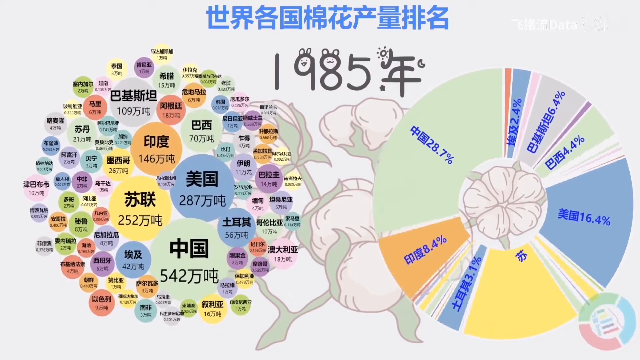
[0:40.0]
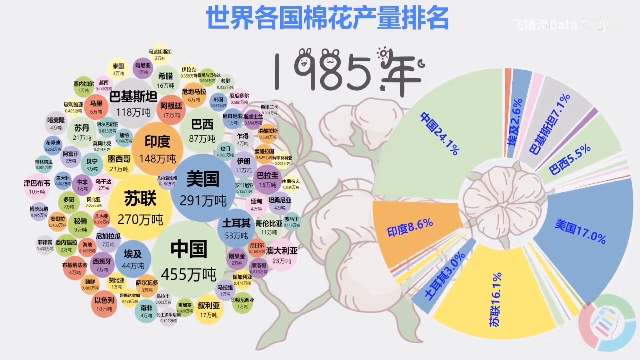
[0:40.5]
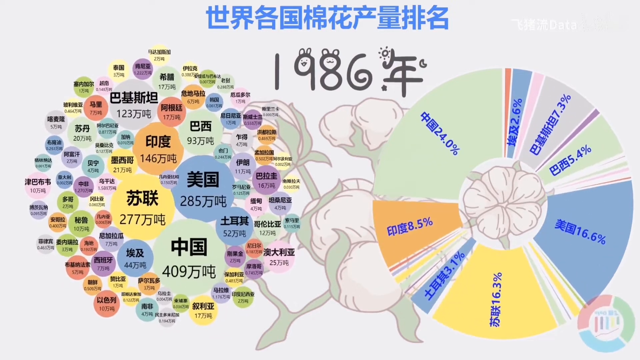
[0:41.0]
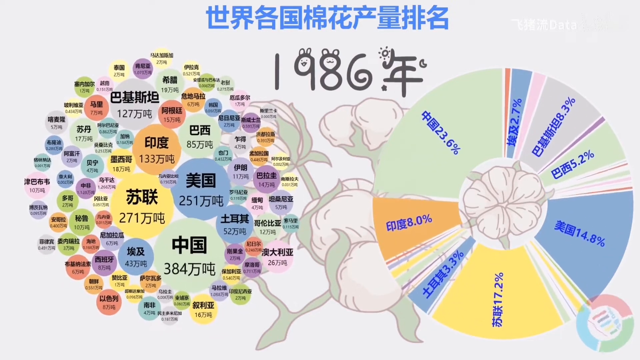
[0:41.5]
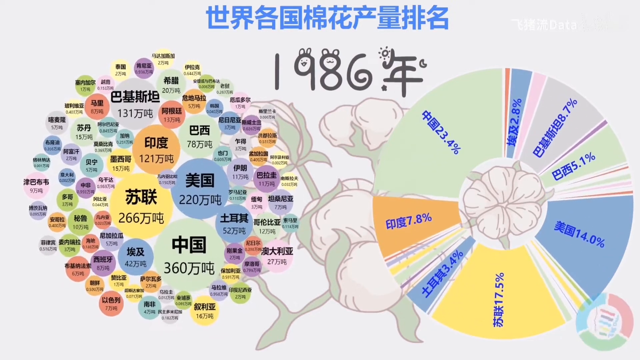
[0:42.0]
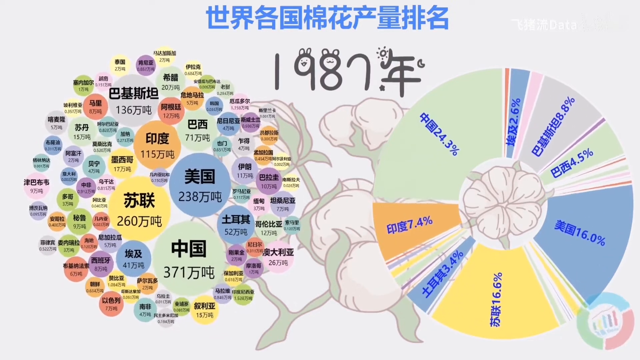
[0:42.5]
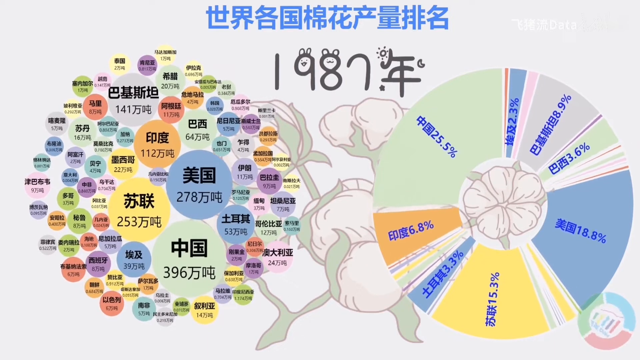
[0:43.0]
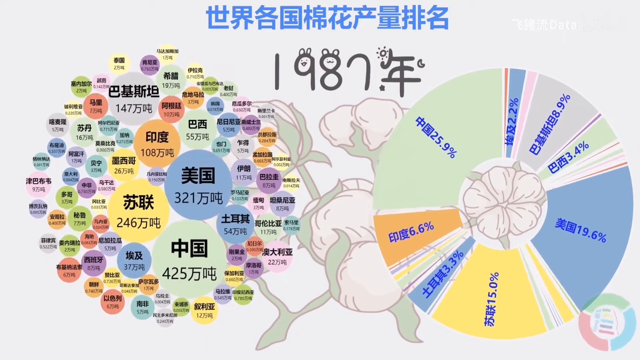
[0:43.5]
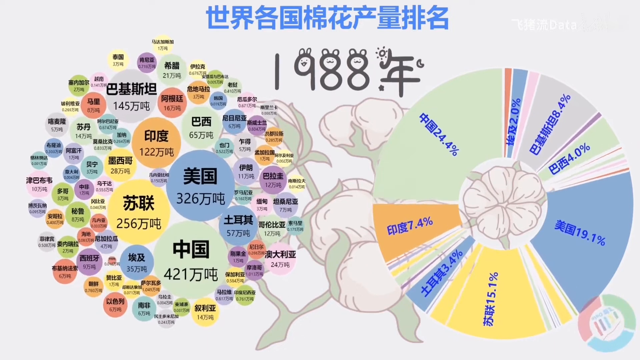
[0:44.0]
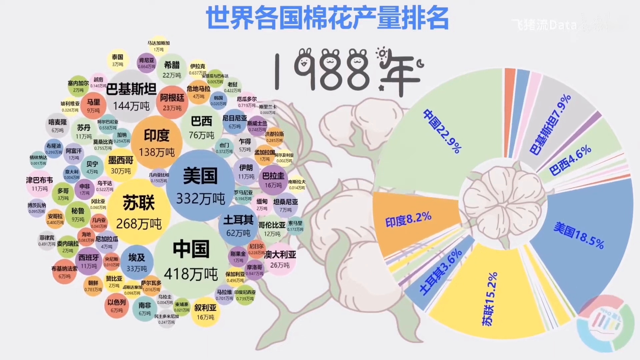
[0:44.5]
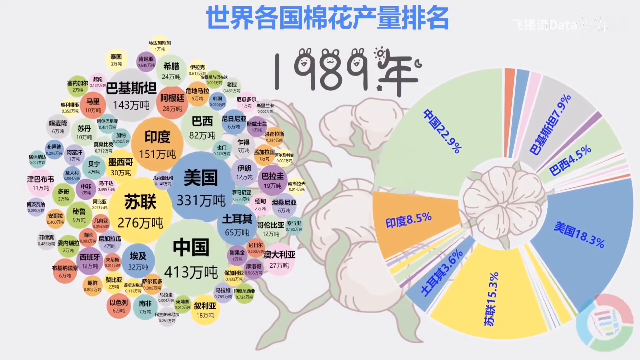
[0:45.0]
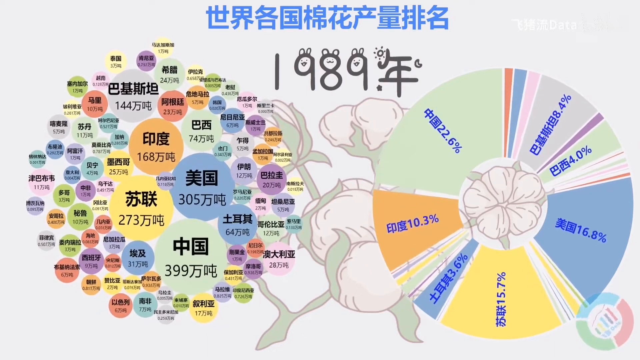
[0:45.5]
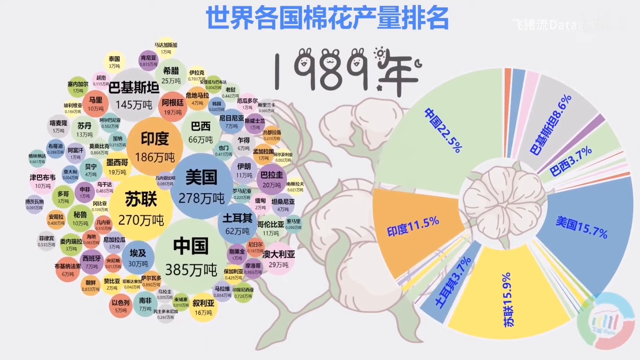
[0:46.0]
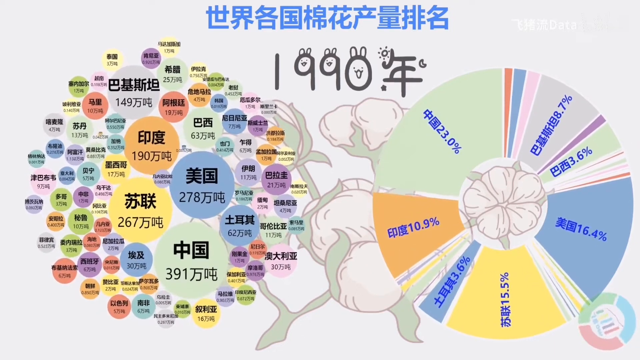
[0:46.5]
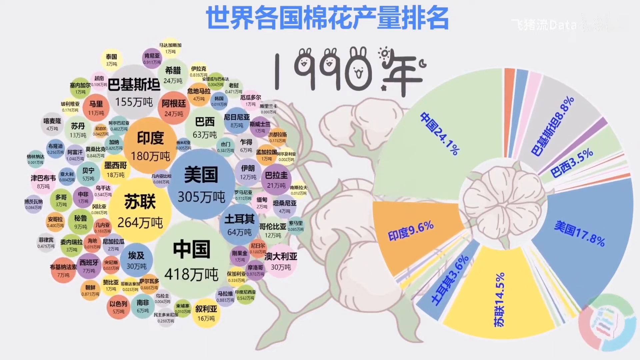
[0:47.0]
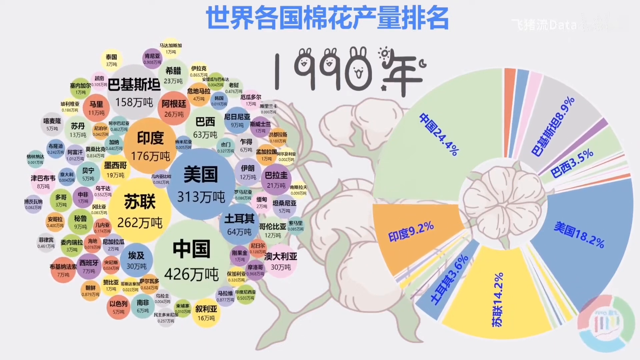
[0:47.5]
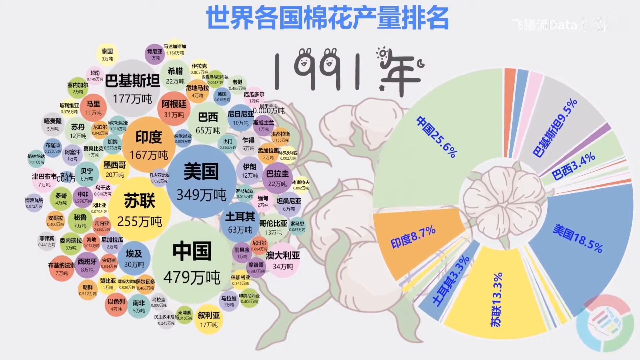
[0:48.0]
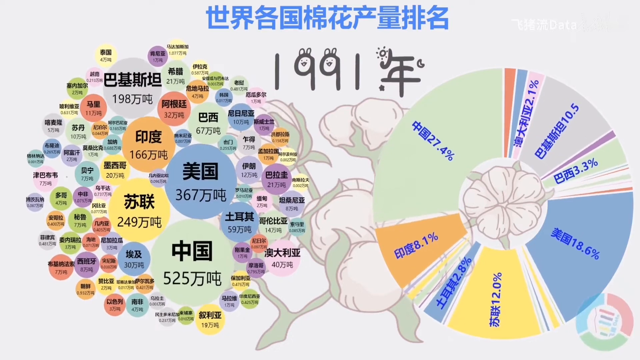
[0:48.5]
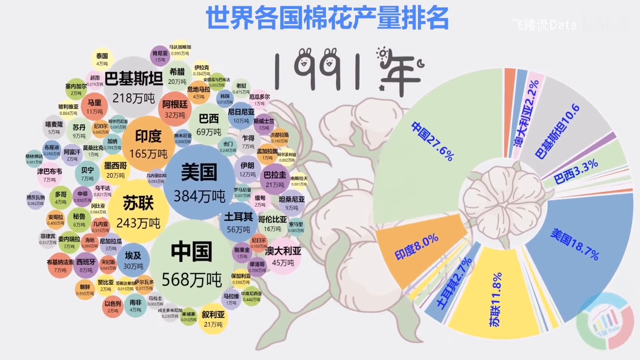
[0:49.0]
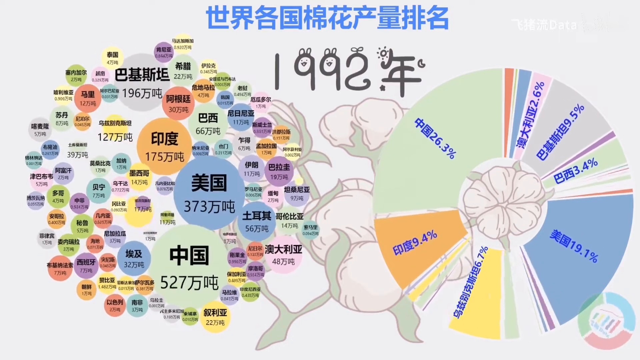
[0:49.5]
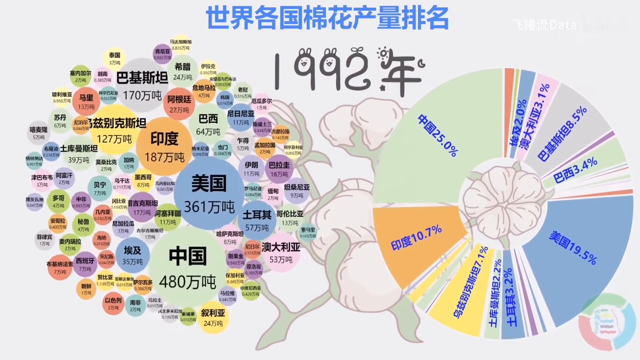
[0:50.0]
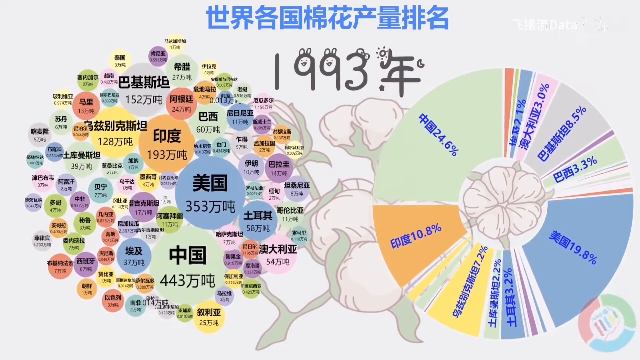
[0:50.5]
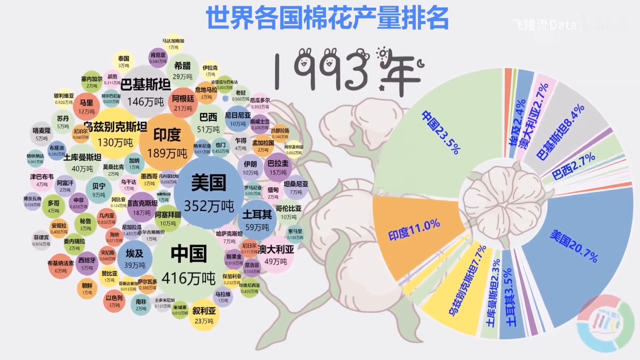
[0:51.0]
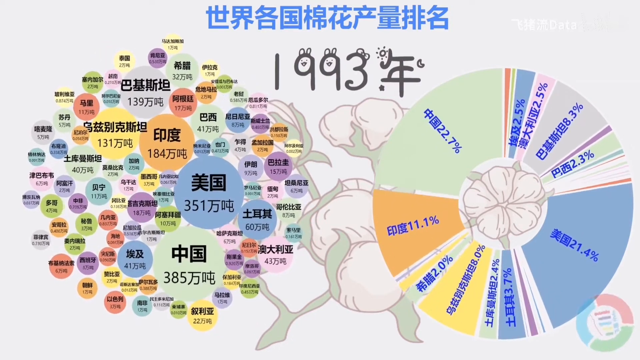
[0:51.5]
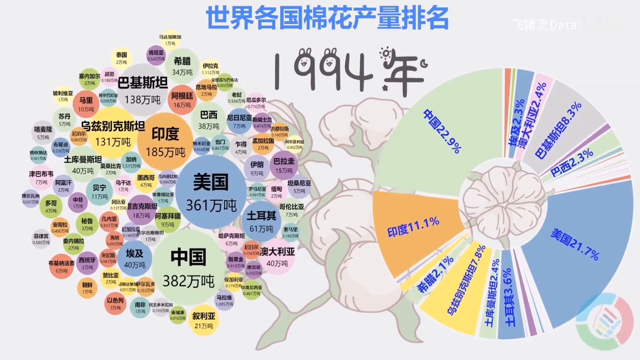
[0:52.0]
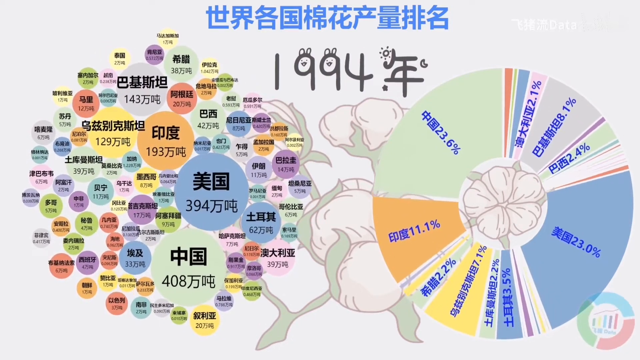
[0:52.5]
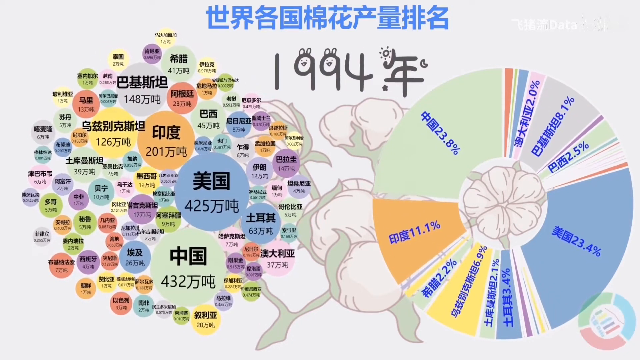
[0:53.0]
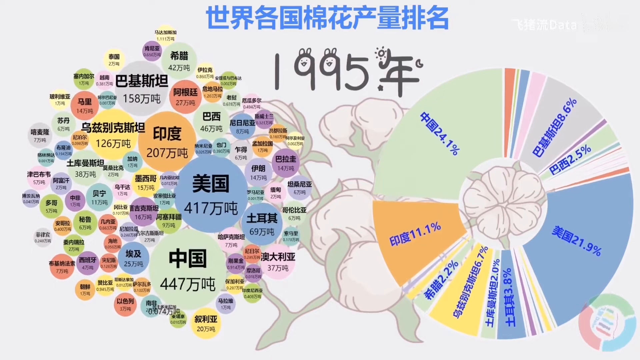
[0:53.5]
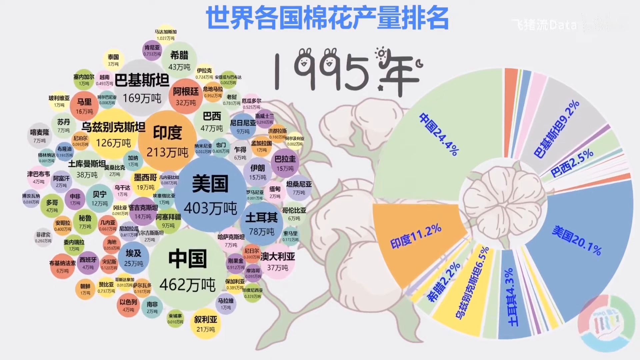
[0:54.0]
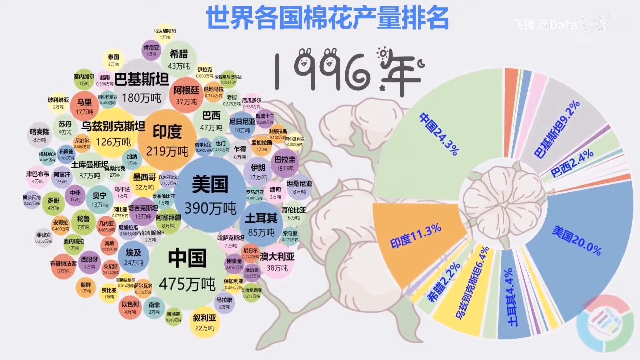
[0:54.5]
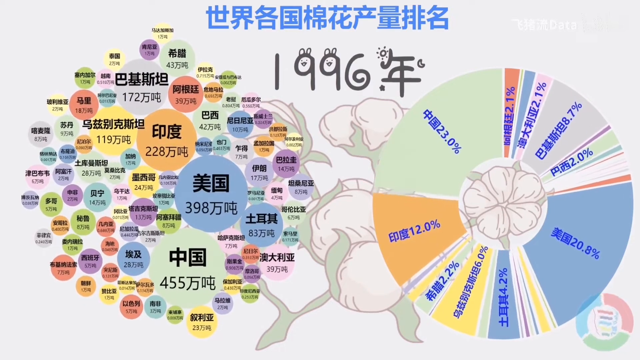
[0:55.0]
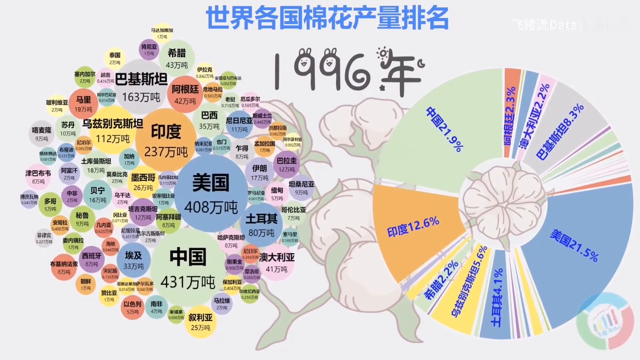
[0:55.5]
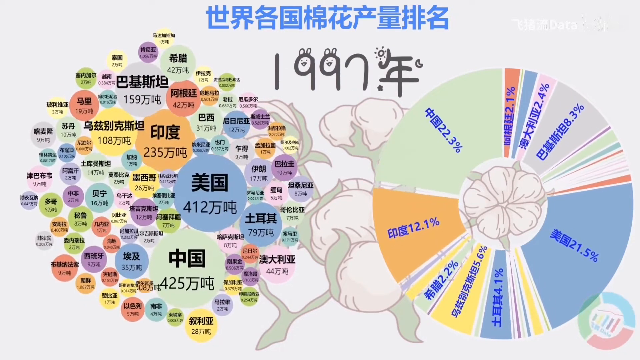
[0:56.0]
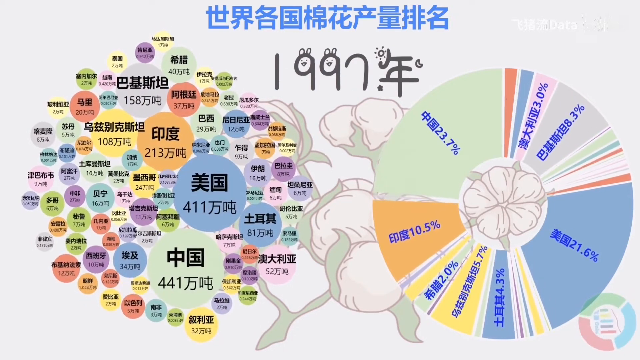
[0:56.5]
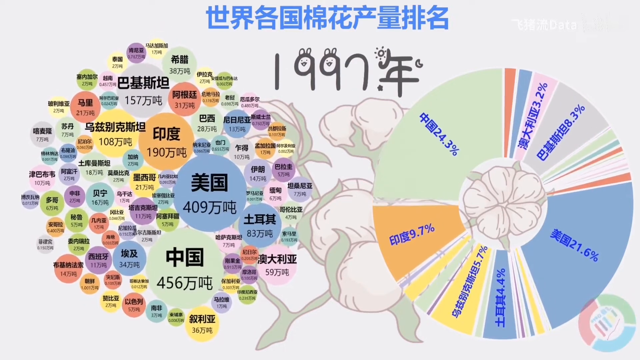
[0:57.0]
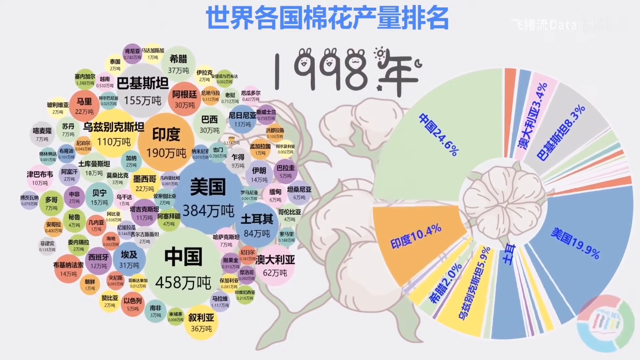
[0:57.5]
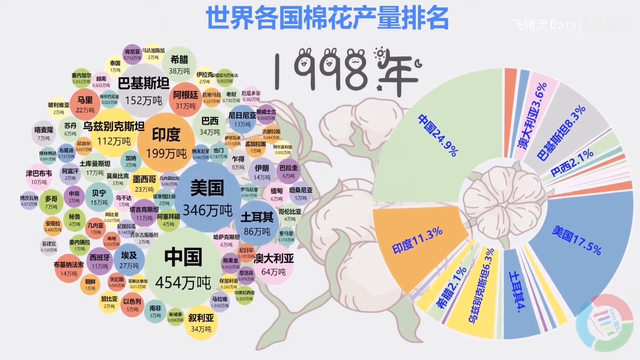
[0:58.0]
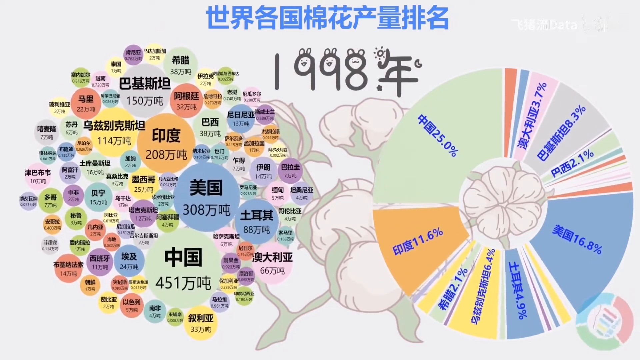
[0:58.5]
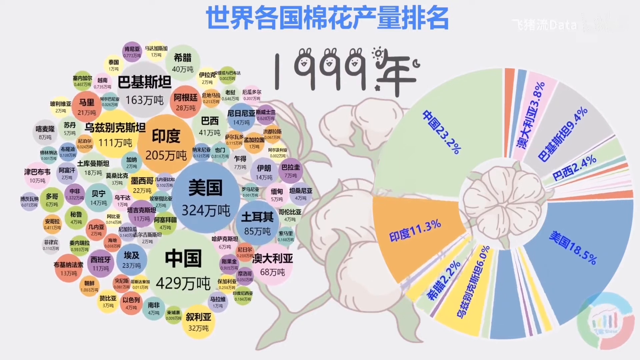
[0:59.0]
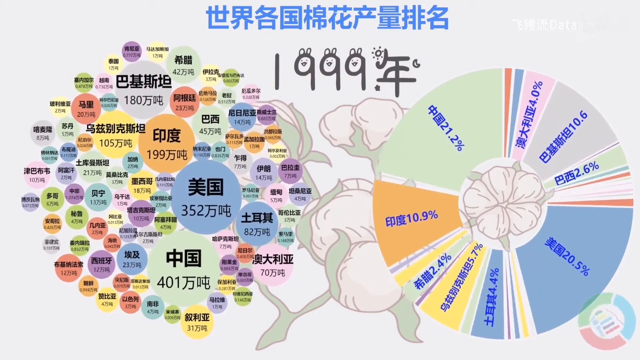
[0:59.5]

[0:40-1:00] The animated charts progress through the years, showing 1987 and 1991 as they track global cotton output across different countries. U.S. output declines from 29.7% of the world's cotton in 1963 to 18.5% in 1991, while China's grows from 10.7% in 1963 to 25.6% by 1991. The bubble chart is on the left and the pie chart on the right. The chart labels are in Chinese, as is the blue title at the top. The year of the data is written between the two charts. Each country's color stays constant across the time points: Mexico in yellow, China in light green and the USA in light blue.